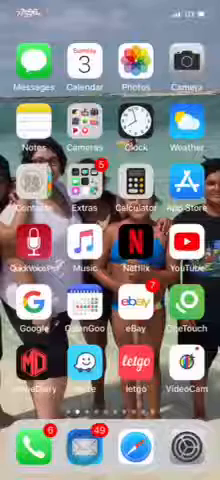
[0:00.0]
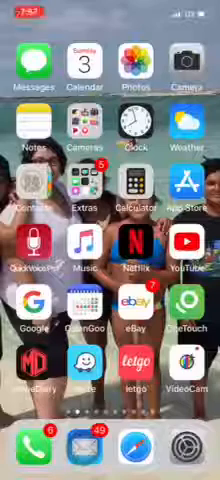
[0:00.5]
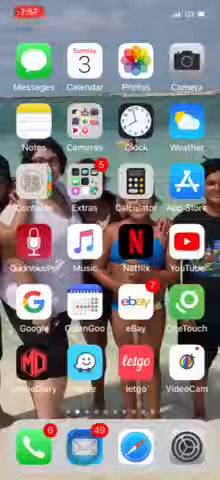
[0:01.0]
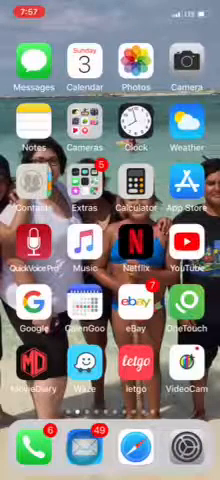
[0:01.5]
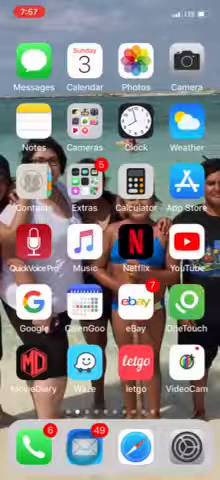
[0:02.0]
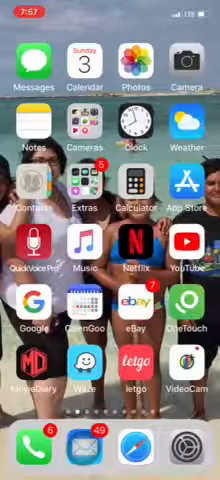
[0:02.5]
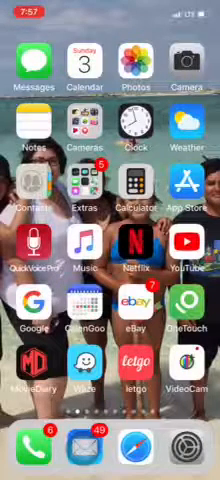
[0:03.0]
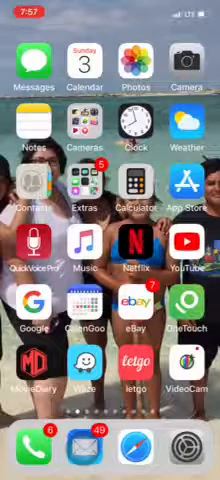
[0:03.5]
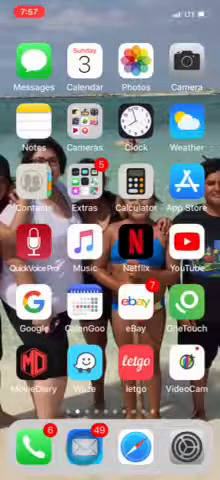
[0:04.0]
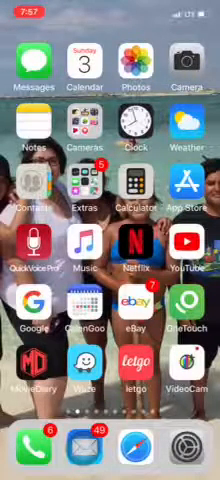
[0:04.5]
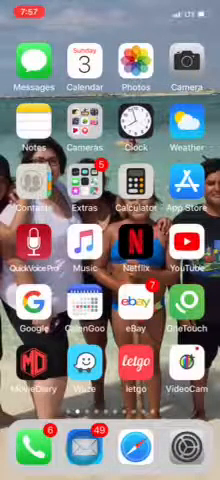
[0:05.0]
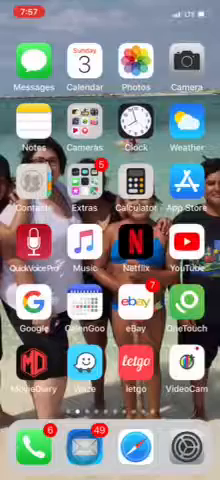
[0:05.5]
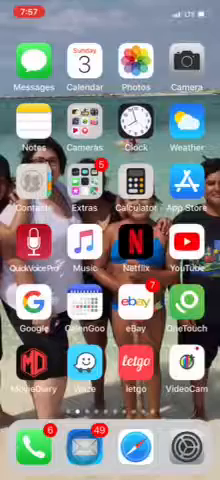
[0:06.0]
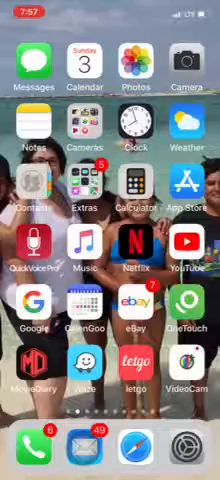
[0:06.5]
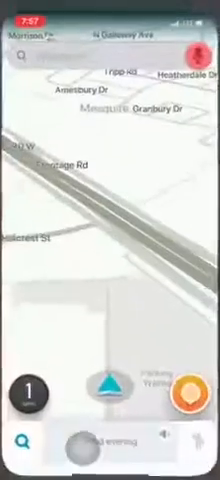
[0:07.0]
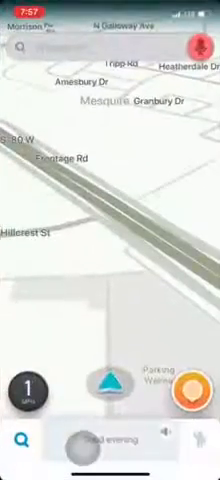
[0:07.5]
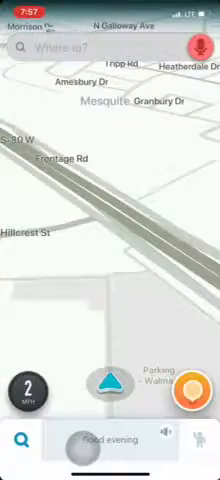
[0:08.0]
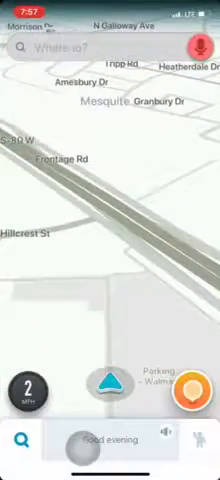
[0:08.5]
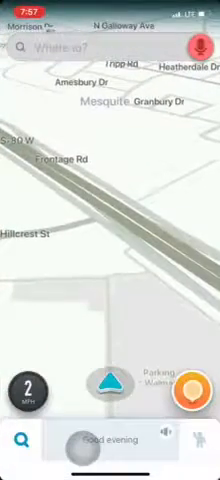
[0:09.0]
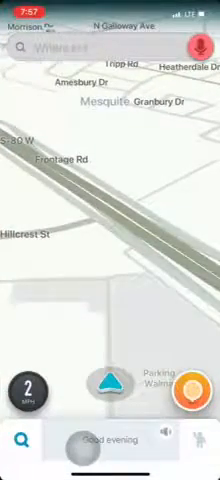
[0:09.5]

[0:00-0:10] Someone records the home screen of their iPhone, model unknown. They open what looks like the map app and show navigation, apparently where they travel or used to travel. They also use an app that looks downloadable, called Waves, which seems to navigate and show where to go. The home screen background possibly shows their family.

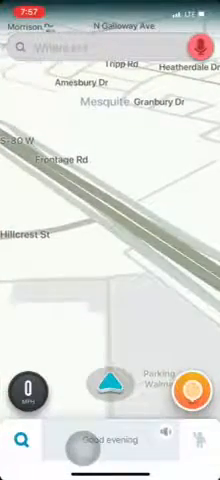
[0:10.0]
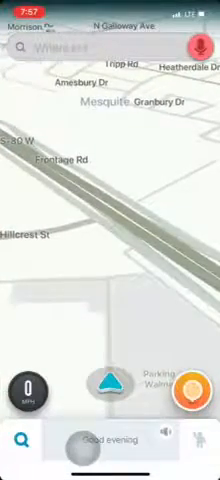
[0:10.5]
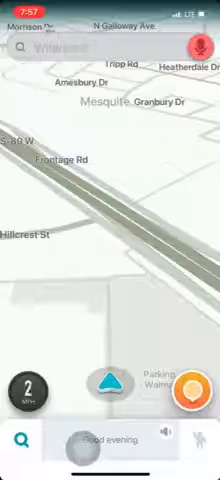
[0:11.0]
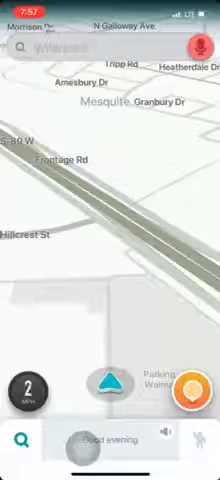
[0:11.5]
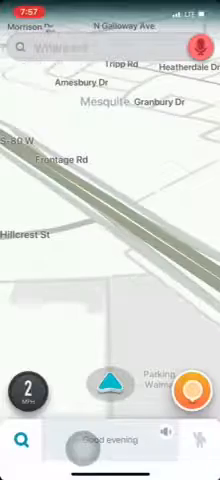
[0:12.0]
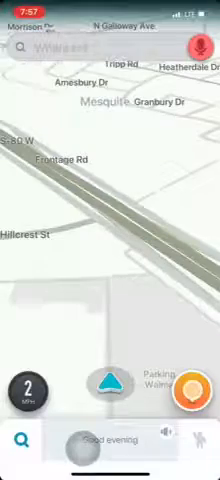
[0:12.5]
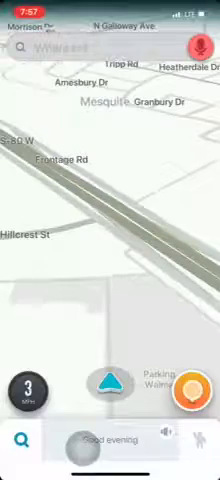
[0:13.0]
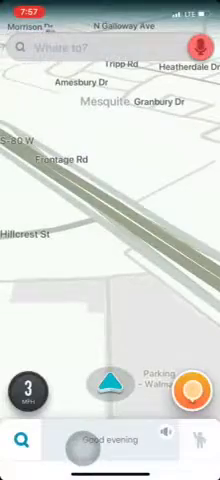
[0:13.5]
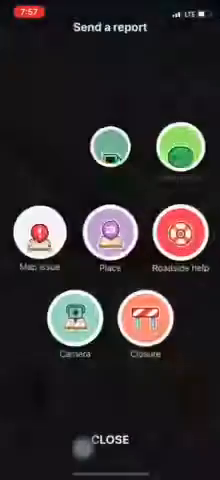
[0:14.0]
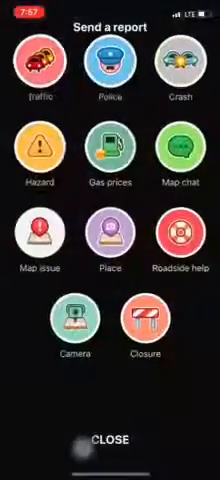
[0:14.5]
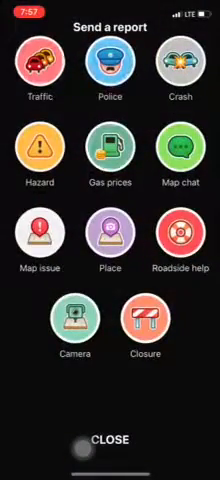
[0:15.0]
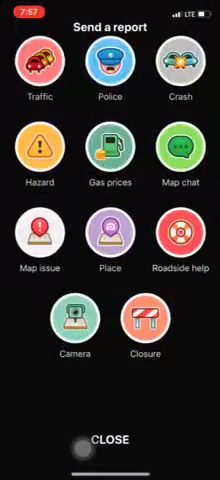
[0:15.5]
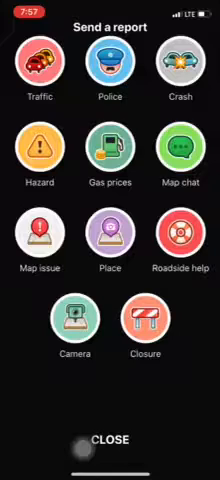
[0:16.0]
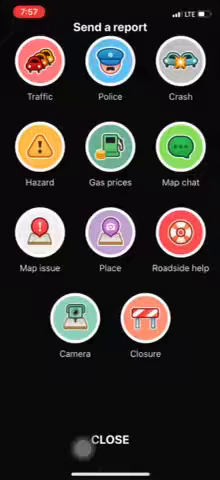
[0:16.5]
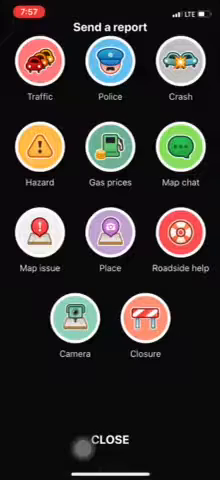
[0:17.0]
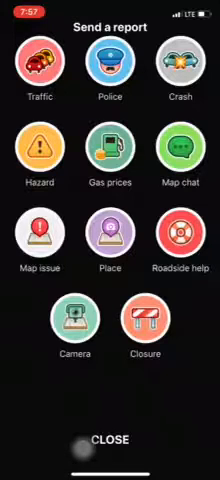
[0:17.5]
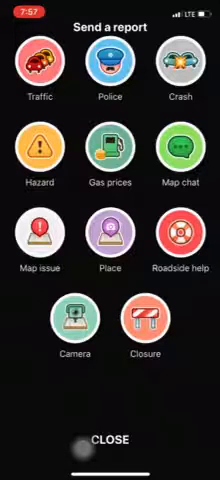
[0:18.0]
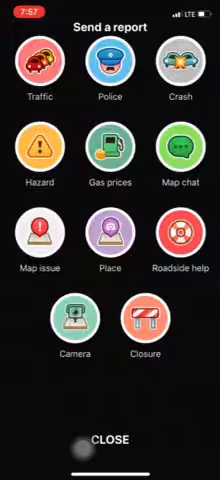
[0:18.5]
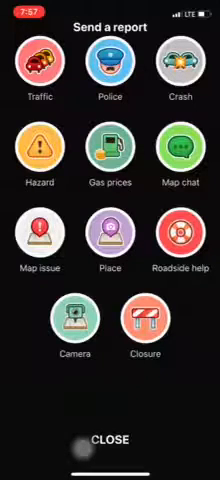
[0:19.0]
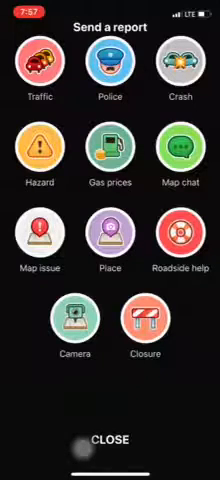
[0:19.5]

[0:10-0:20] The Waves app is shown in more detail, displaying different places to go and features such as traffic, police, gas prices, hazards and map chats. A pointer can be placed on the destination. Other options include roadside help, calling the police, map issues and a camera.